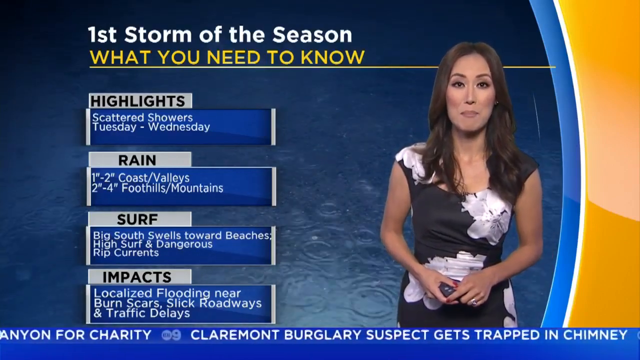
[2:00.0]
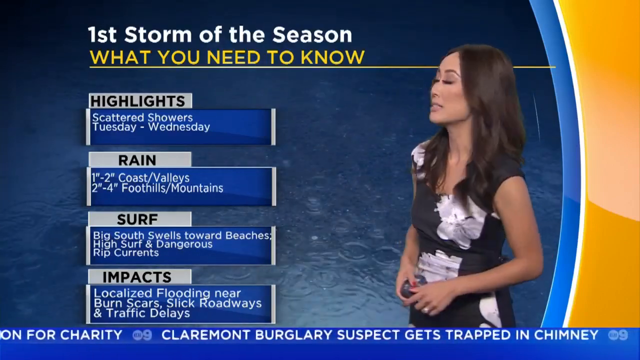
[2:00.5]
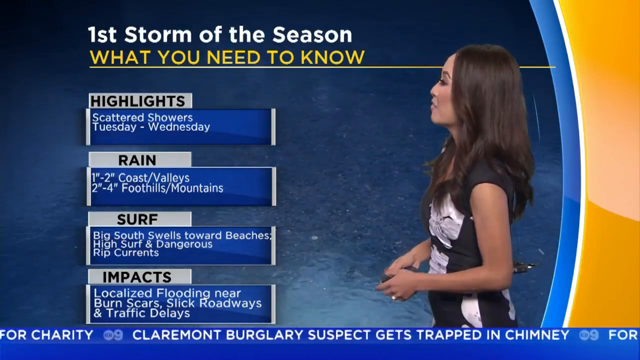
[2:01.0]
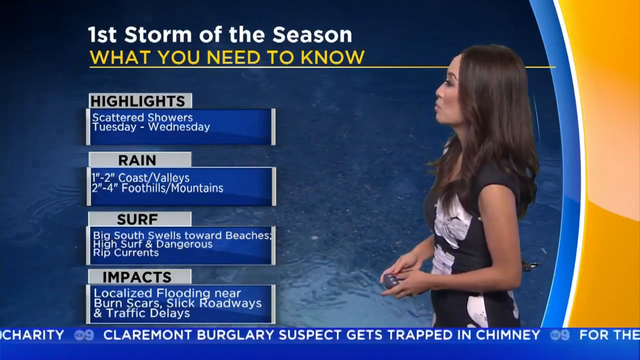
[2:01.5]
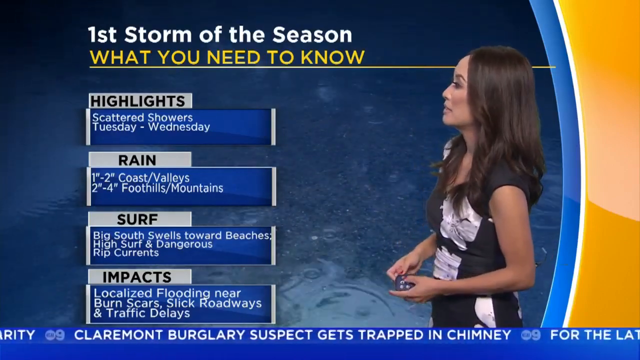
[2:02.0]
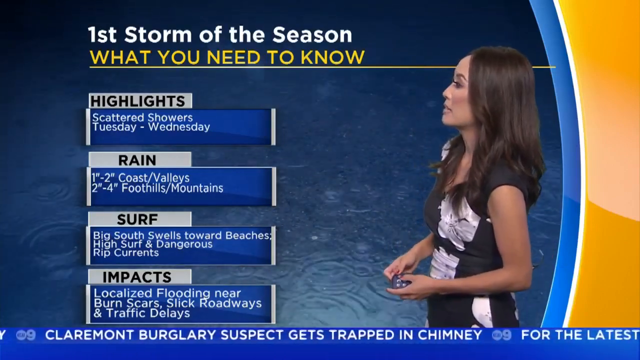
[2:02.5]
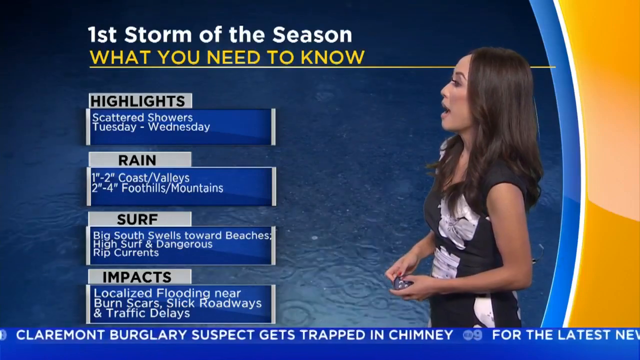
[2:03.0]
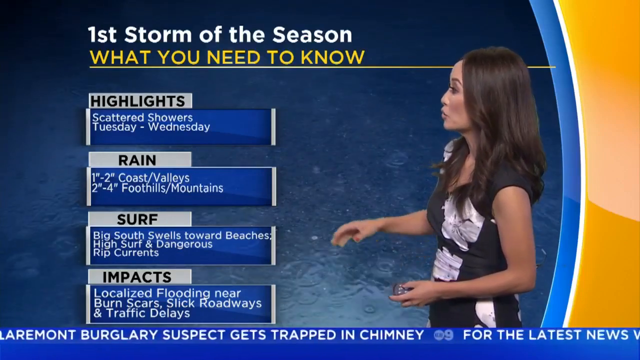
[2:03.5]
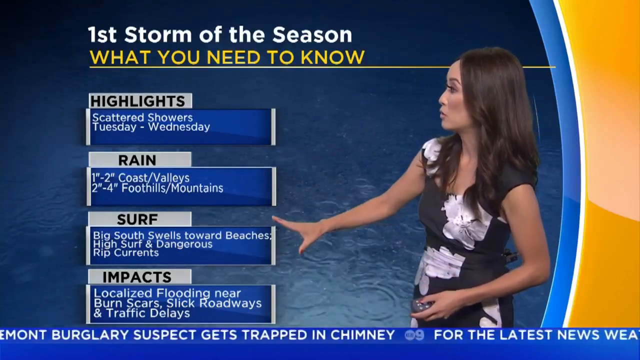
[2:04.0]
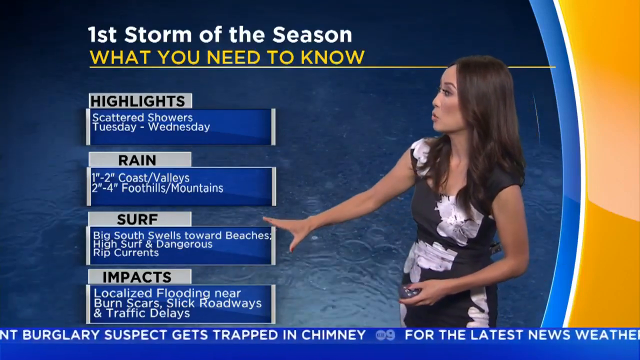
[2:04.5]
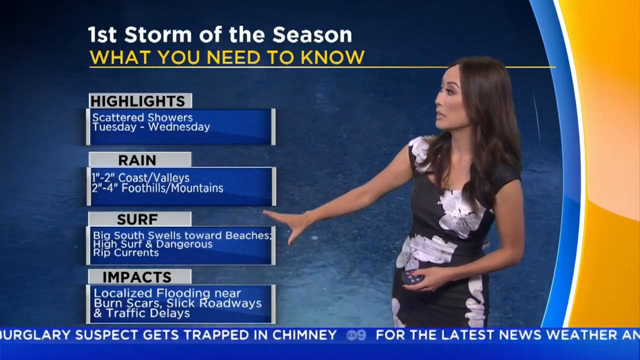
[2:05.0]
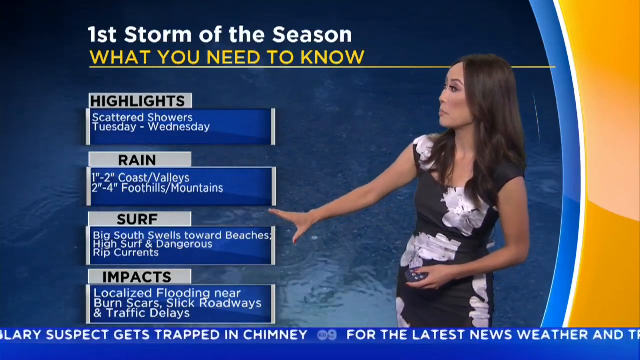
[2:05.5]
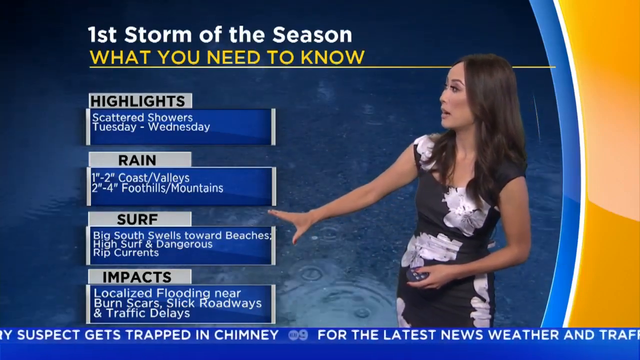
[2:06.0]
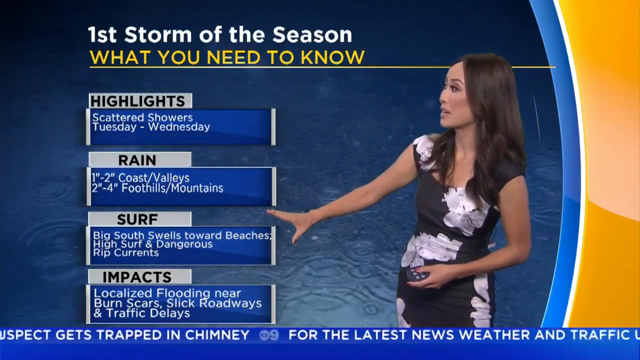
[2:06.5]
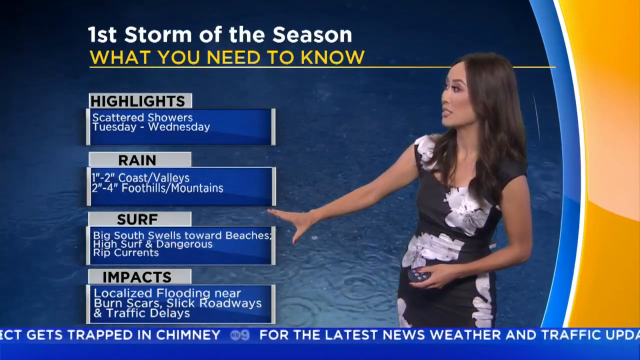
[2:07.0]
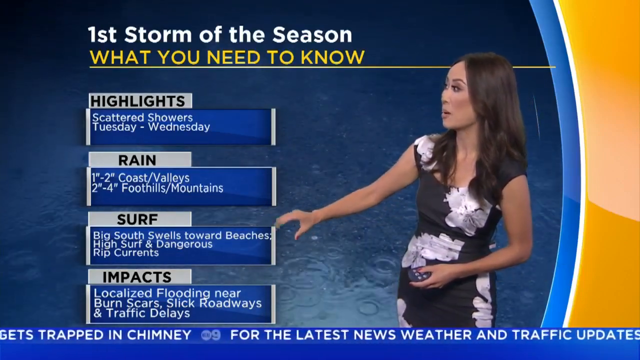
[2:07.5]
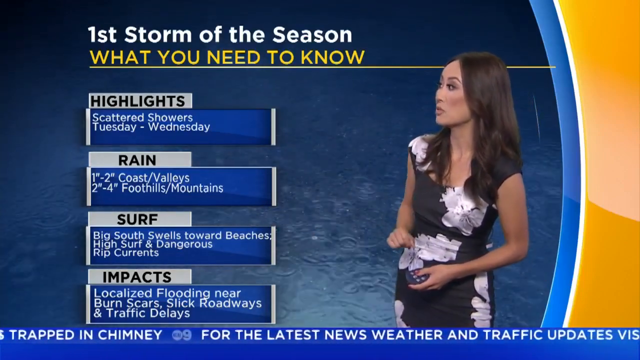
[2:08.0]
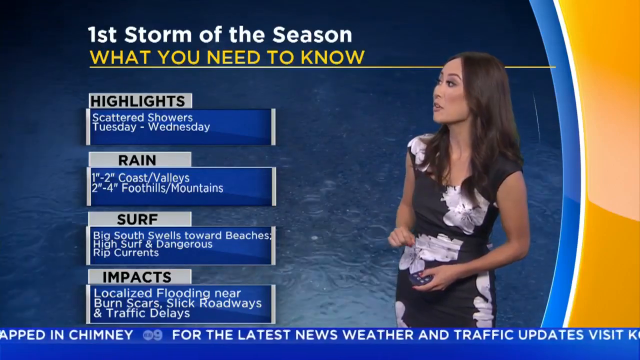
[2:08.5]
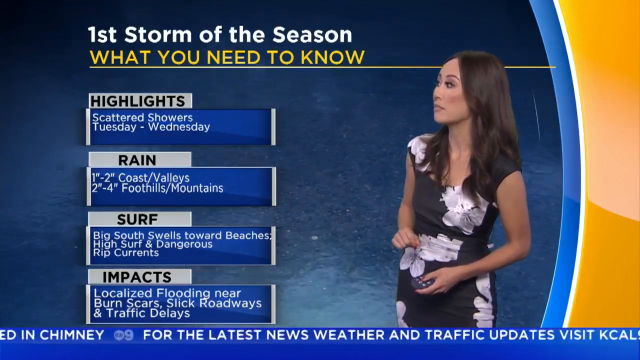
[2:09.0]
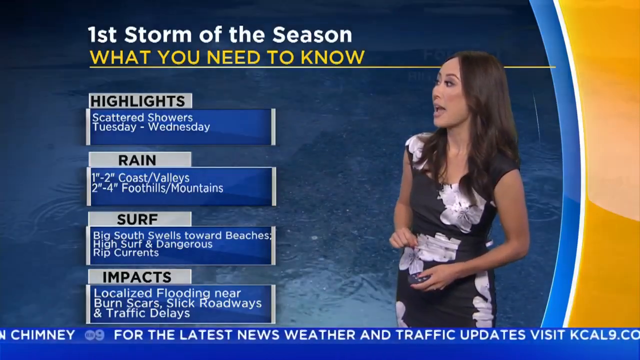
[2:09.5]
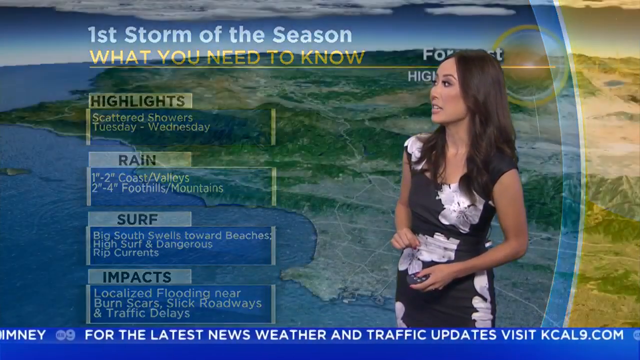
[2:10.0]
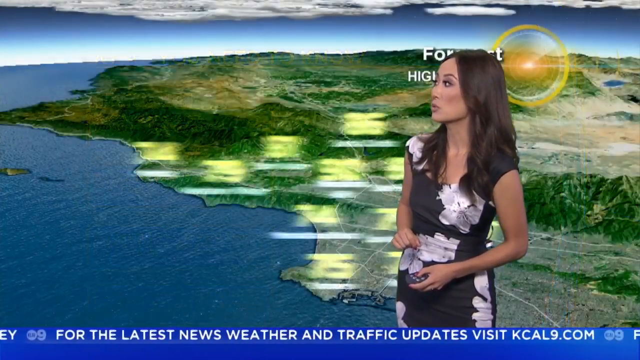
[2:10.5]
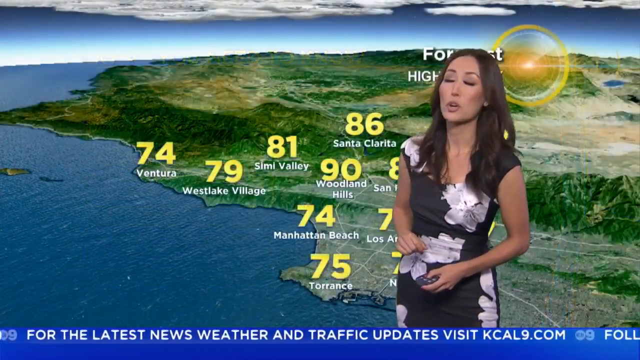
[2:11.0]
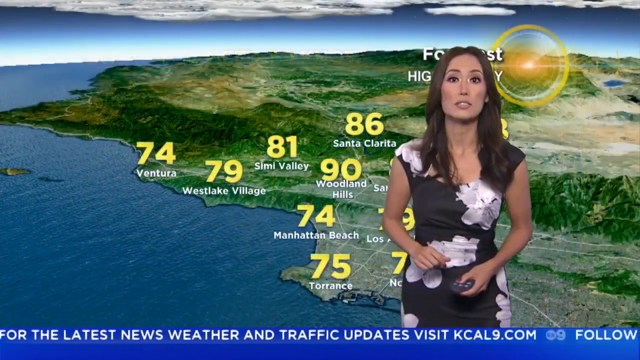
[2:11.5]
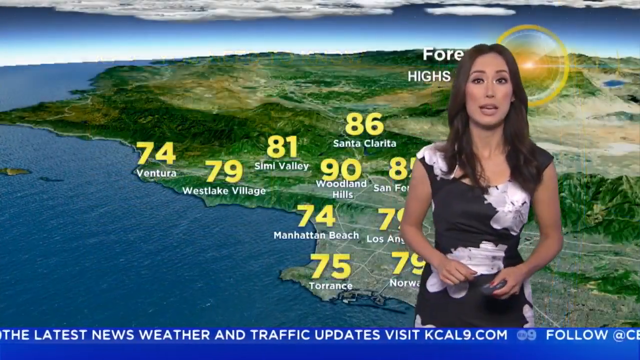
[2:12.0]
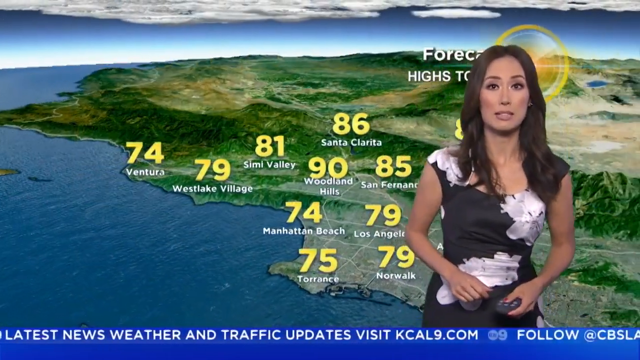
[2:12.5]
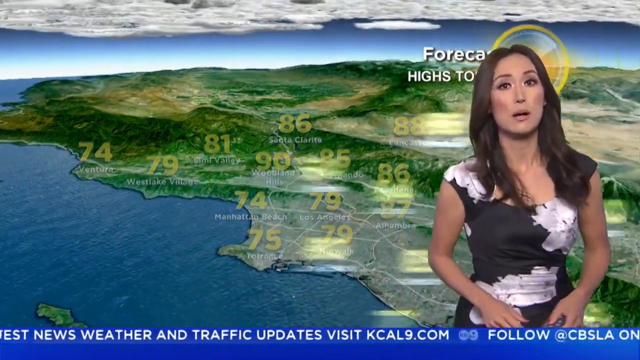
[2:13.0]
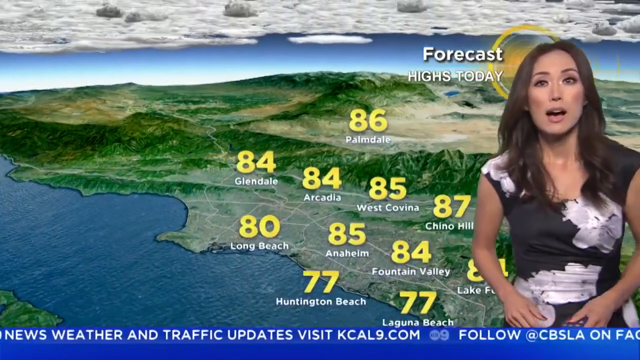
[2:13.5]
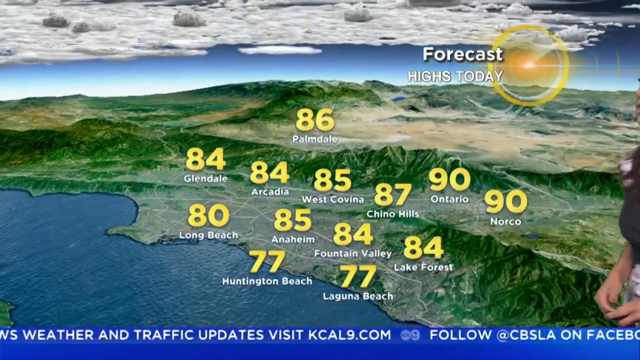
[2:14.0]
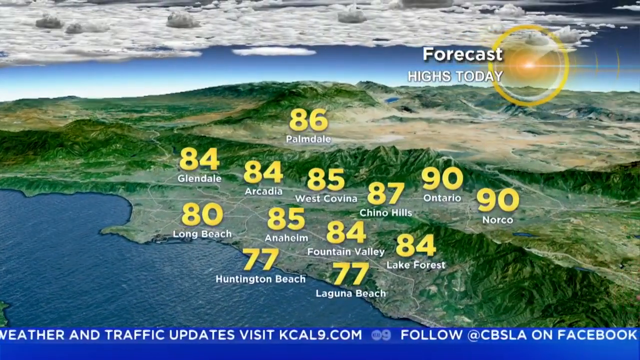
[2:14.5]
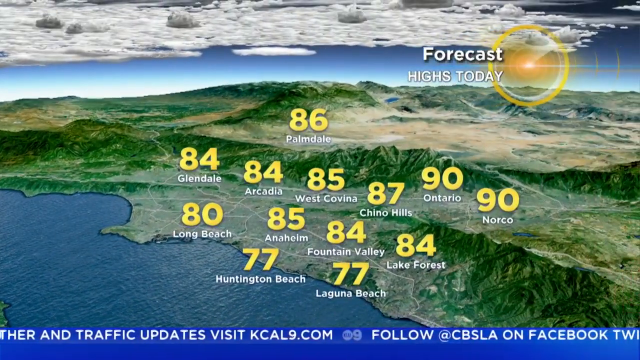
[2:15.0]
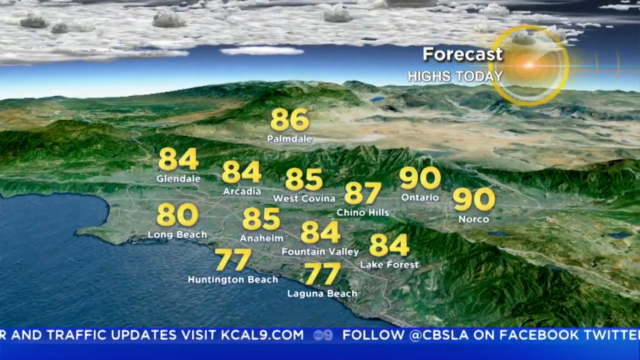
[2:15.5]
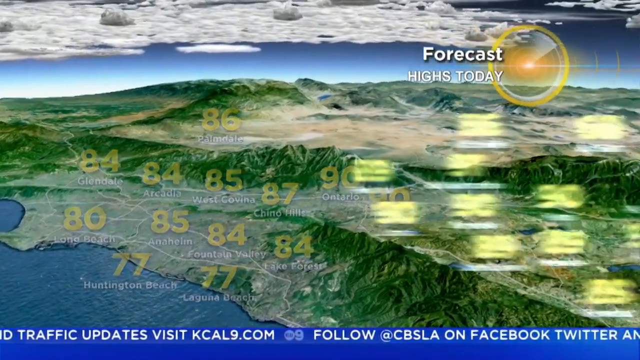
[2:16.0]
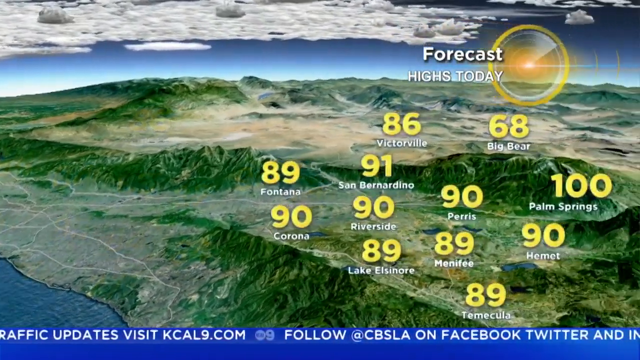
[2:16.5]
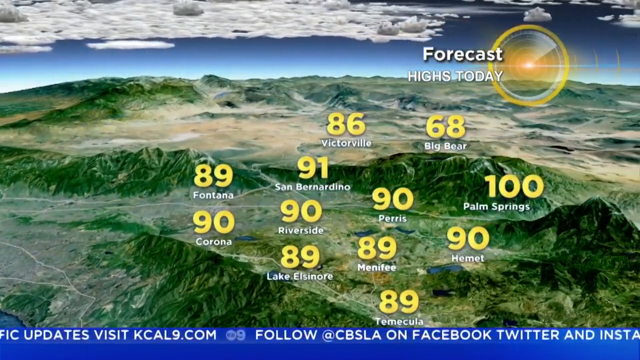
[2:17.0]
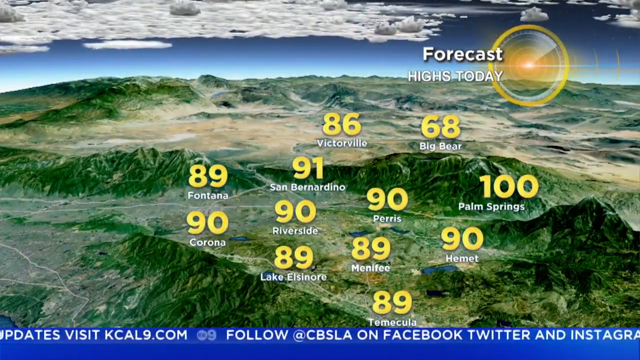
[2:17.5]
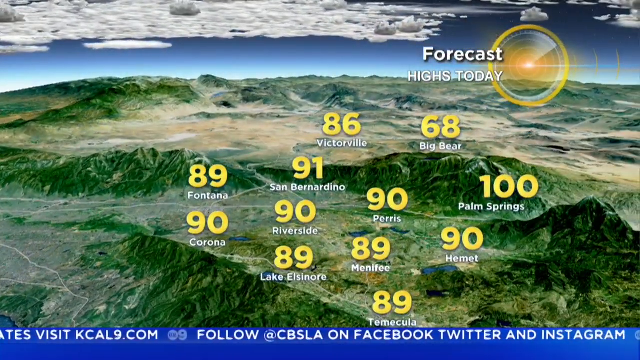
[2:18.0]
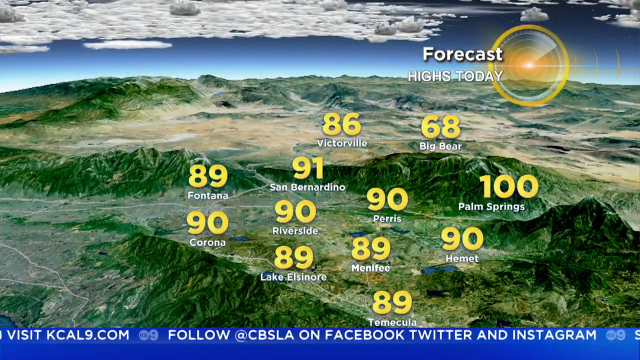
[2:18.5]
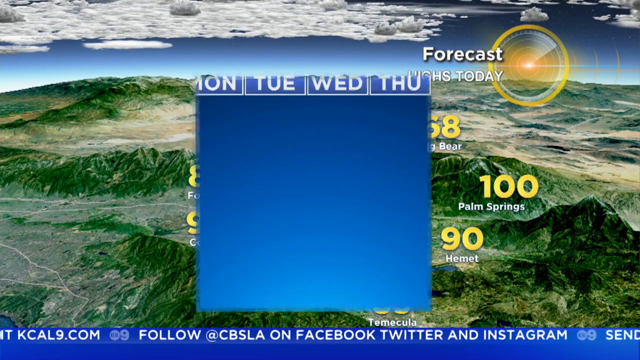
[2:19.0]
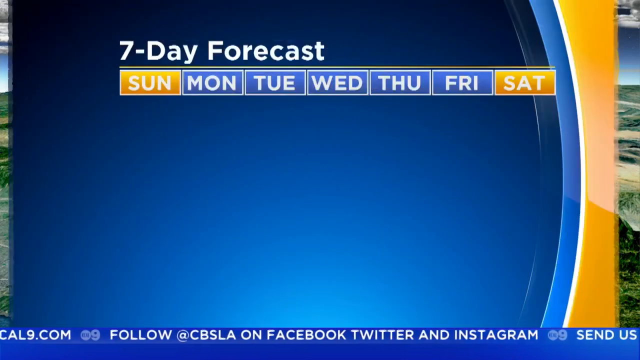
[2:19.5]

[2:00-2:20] A weather lady is on screen holding a clicker. She apparently has red nail polish and possibly a ring on her finger, brunette hair, and a white and black dress, apparently with white flowers on it; she looks like she could be Asian. On-screen text reads "first storm of the season," followed by "scattered showers Tuesday through Wednesday," "rain, one to two inches, coasts and valleys," "two to four inches, foothills and mountains," "surf, big south swells toward beaches," "high surf and dangerous rip currents," and "impacts, localized flooding near burn scars, slick roadways, traffic delays." She possibly has a little microphone attached to the back of her dress and talks with her hands a lot. A "forecast" screen of today's highs shows most temperatures in the California area from 77 to 90 degrees, 100 degrees in the Palm Springs area and 60 degrees in the Big Bear area. Right before the end, "seven day forecast" appears.